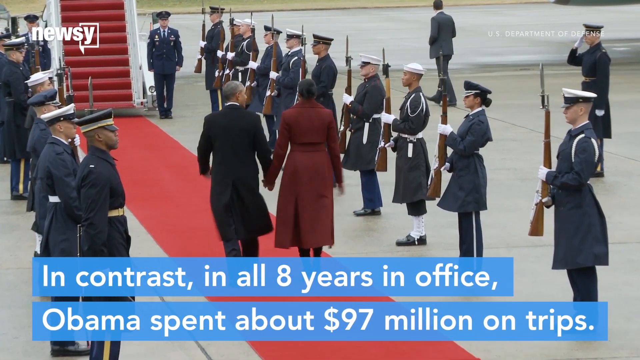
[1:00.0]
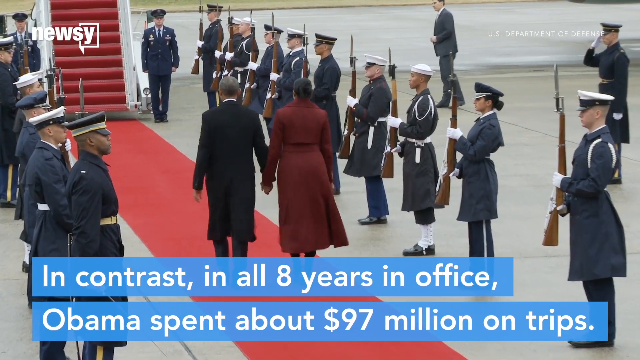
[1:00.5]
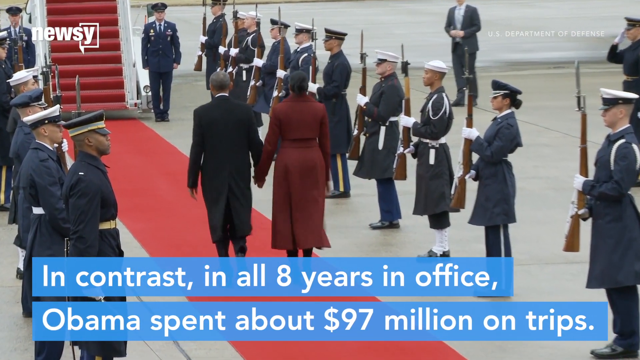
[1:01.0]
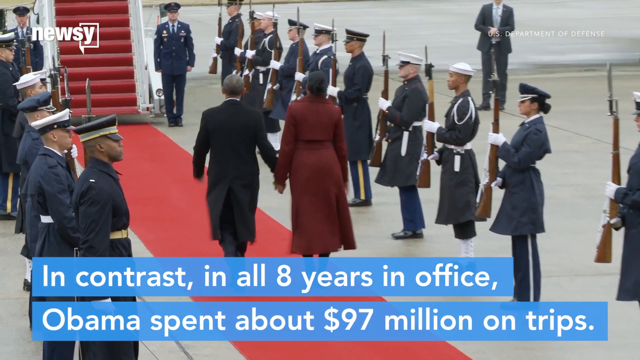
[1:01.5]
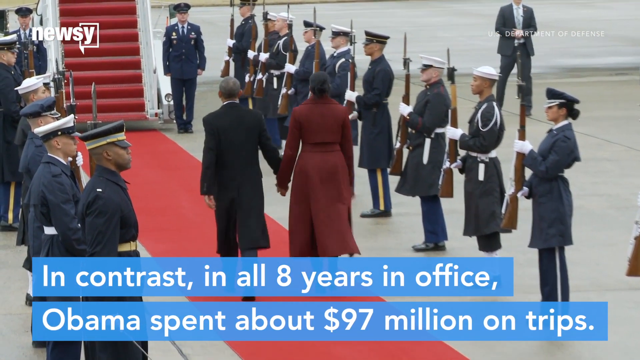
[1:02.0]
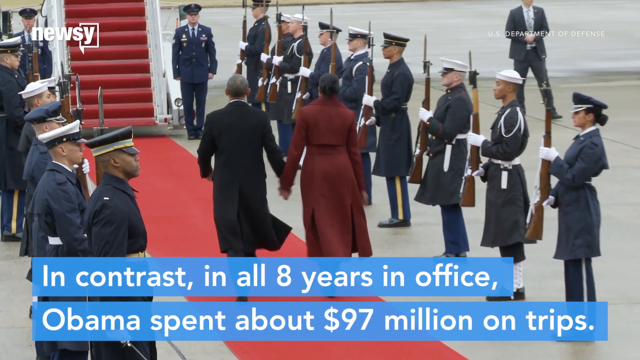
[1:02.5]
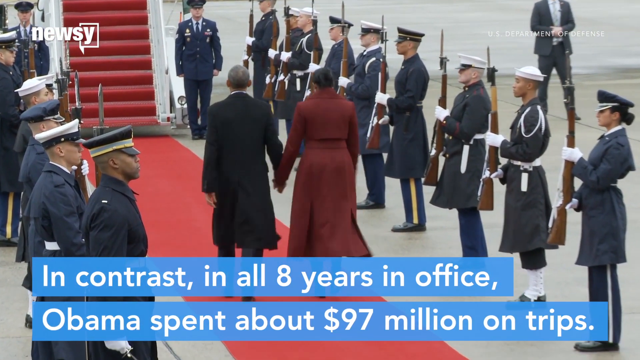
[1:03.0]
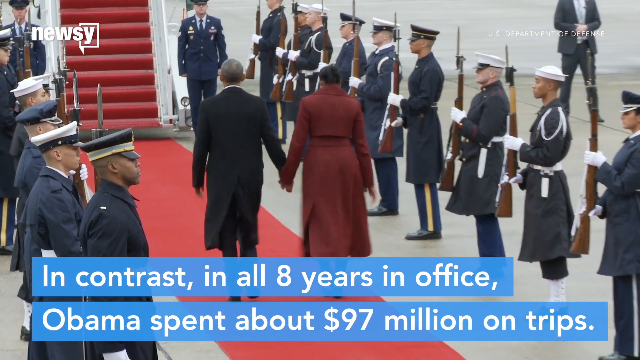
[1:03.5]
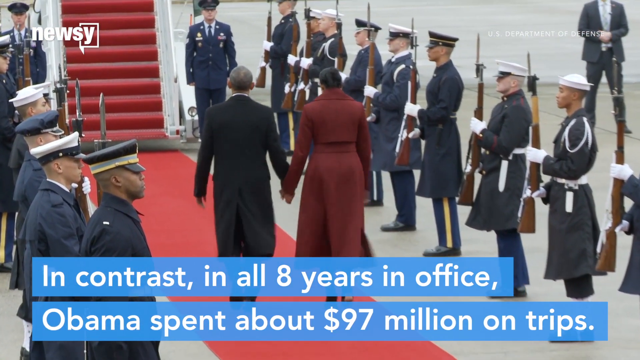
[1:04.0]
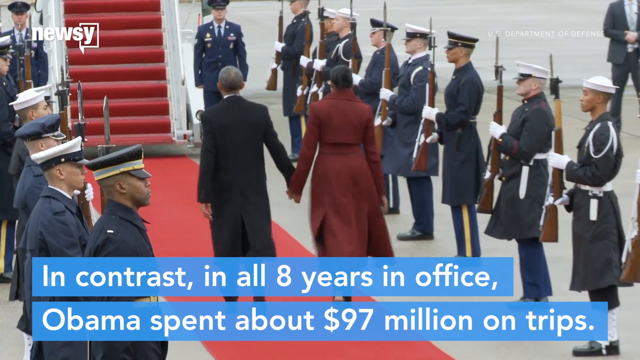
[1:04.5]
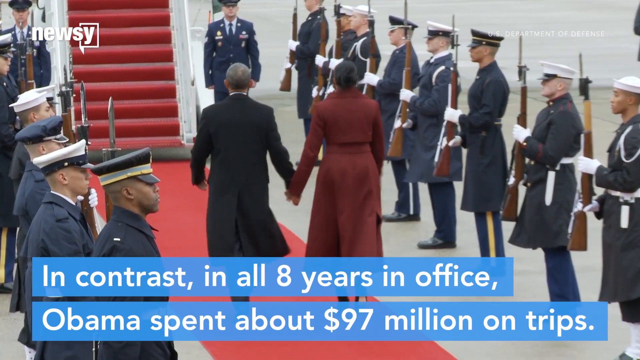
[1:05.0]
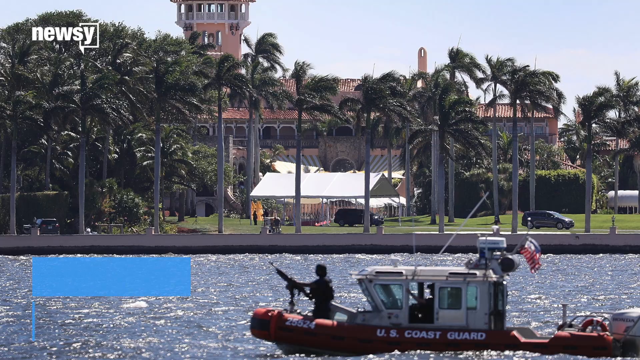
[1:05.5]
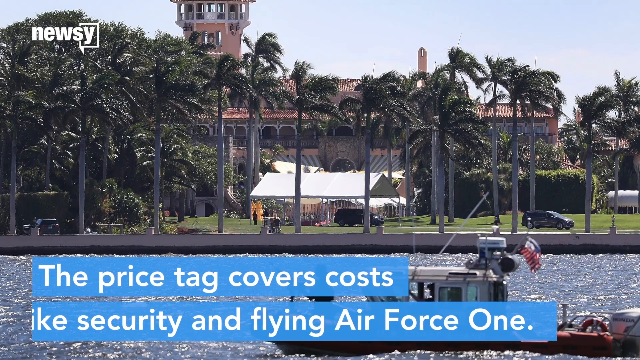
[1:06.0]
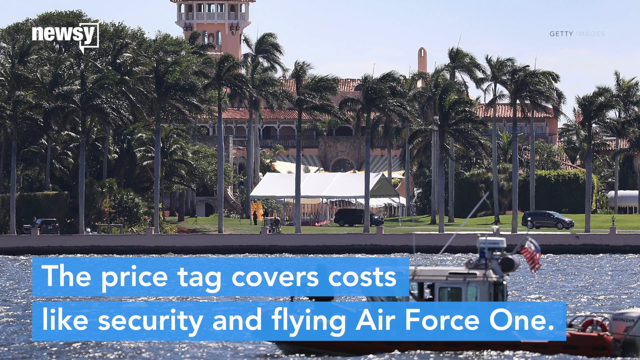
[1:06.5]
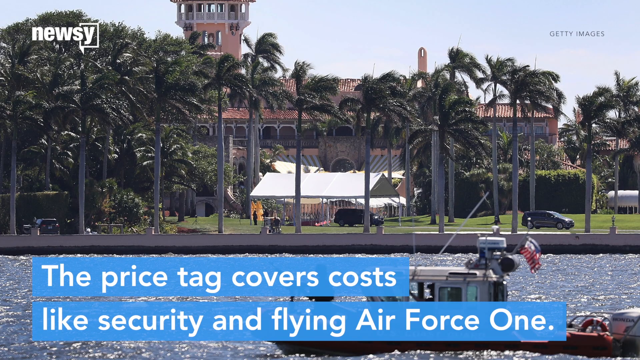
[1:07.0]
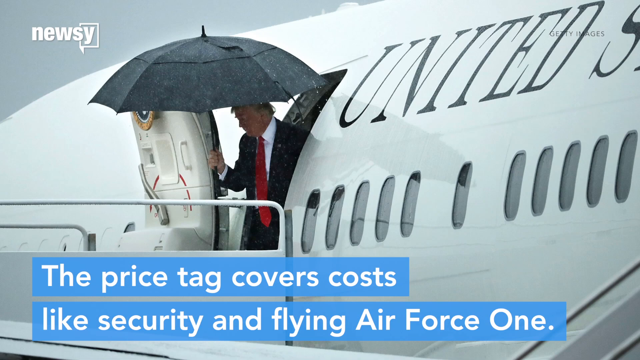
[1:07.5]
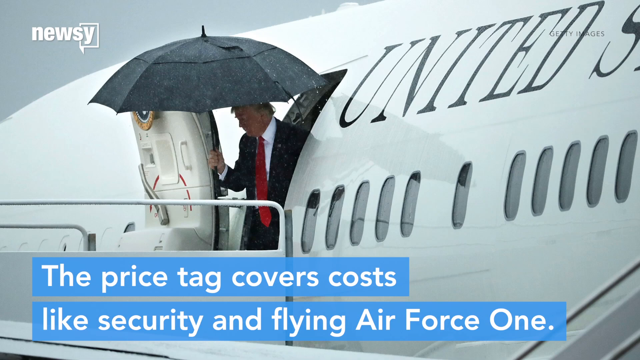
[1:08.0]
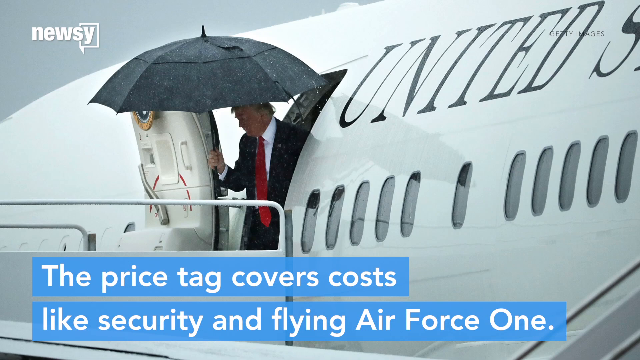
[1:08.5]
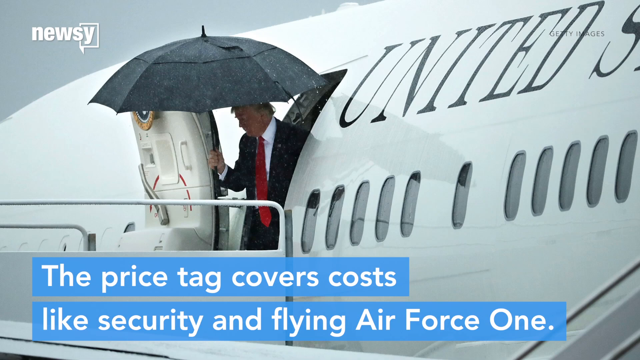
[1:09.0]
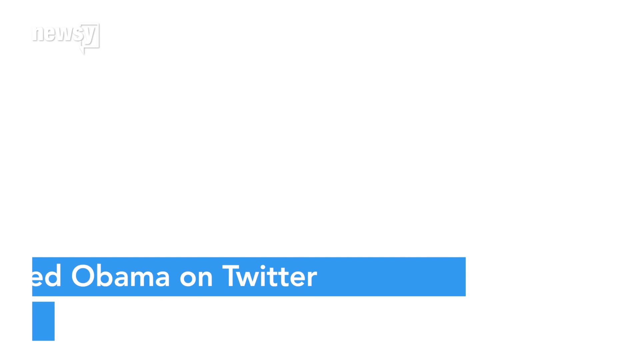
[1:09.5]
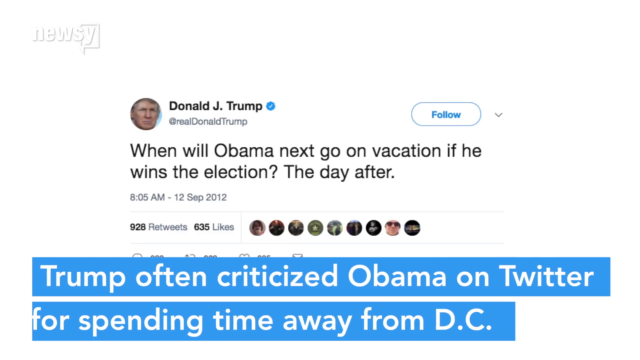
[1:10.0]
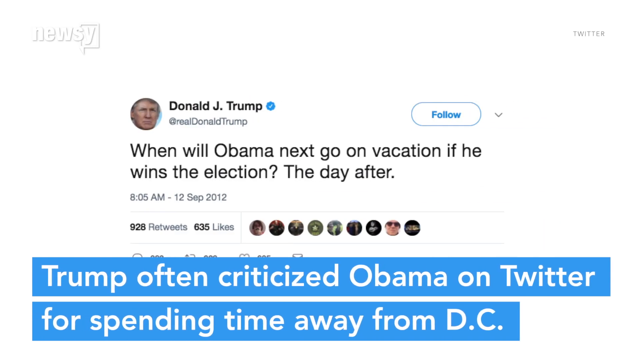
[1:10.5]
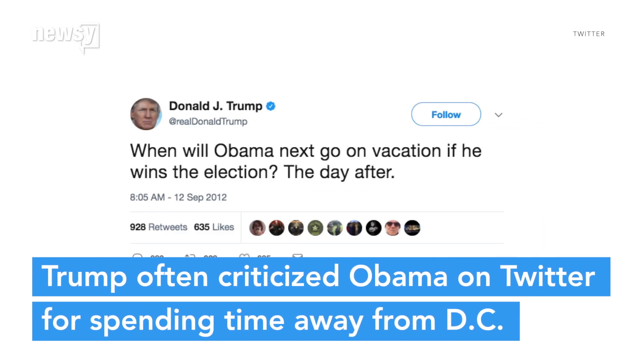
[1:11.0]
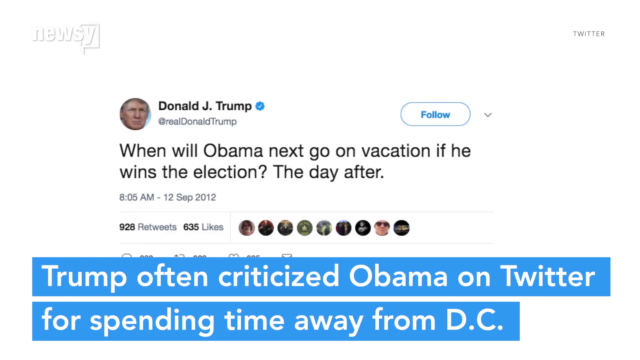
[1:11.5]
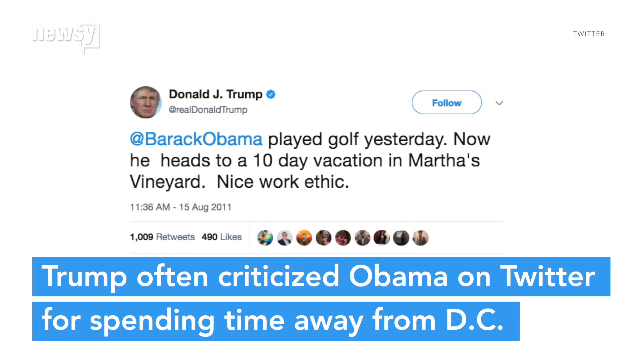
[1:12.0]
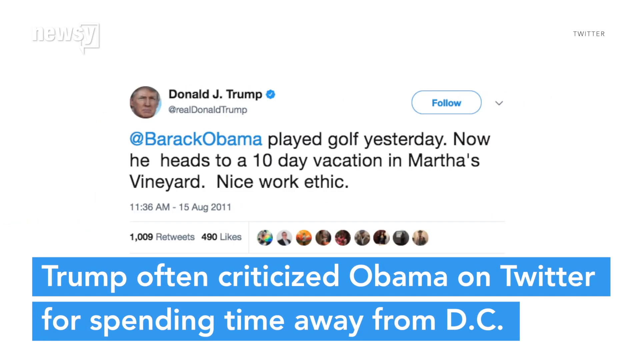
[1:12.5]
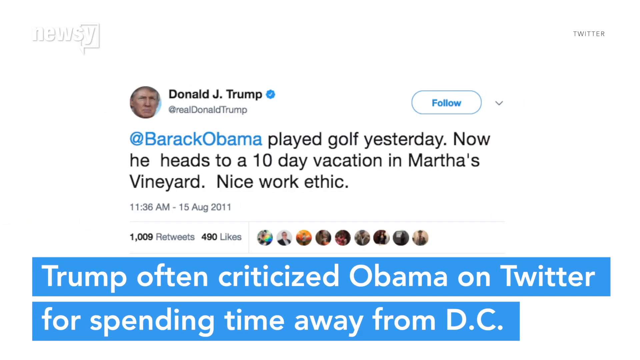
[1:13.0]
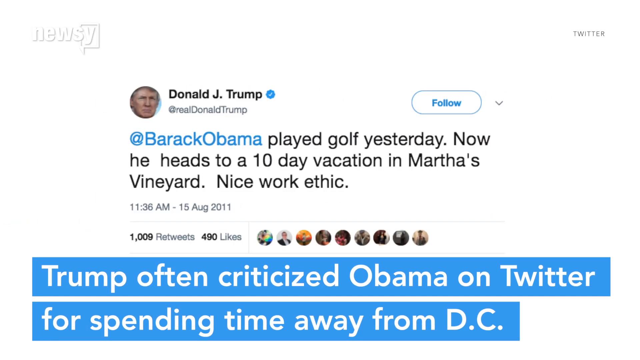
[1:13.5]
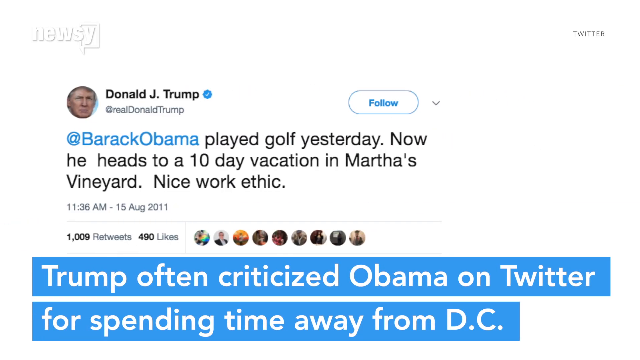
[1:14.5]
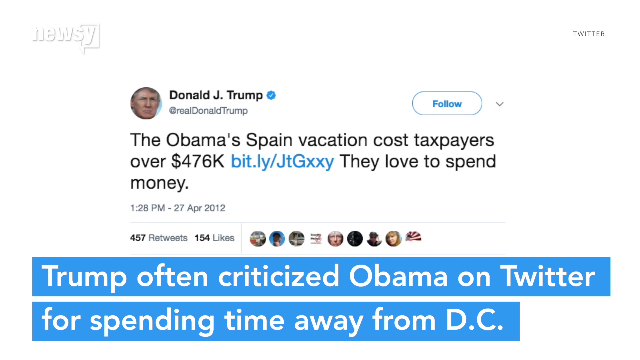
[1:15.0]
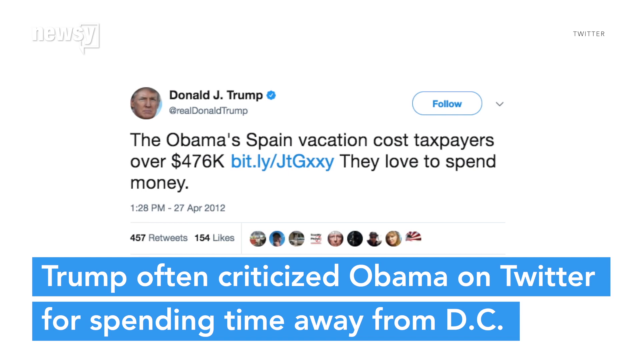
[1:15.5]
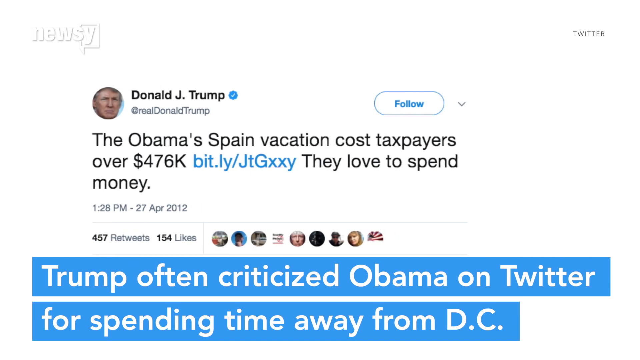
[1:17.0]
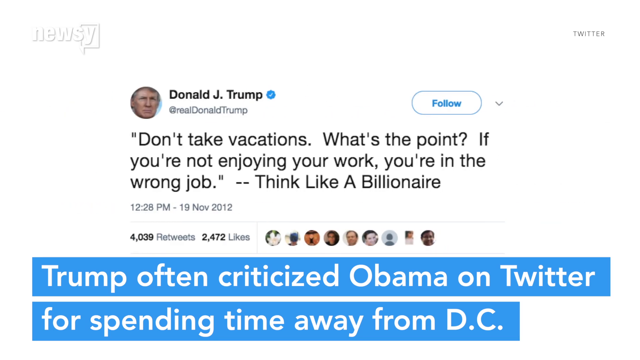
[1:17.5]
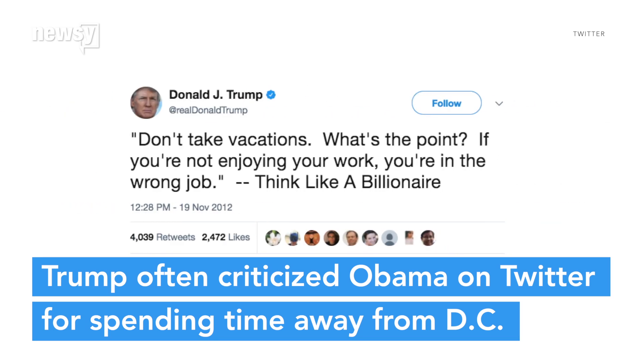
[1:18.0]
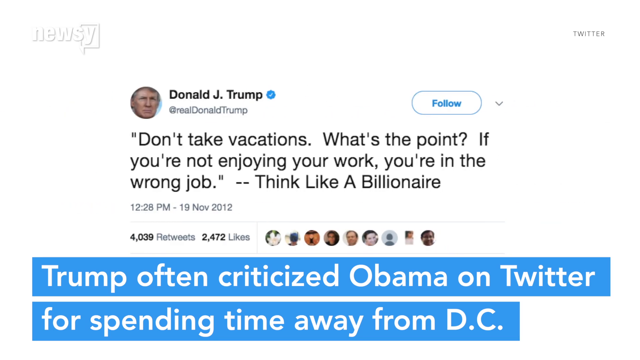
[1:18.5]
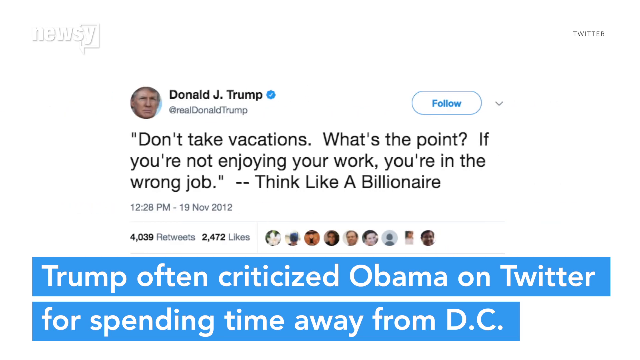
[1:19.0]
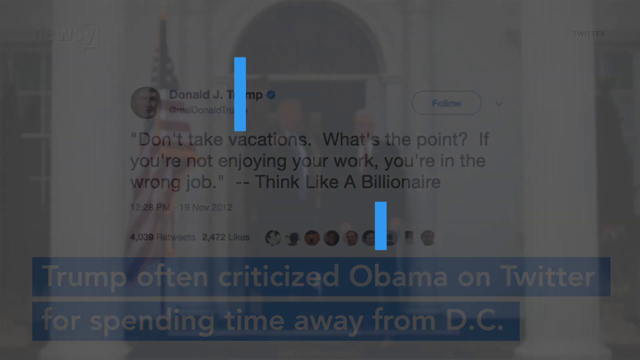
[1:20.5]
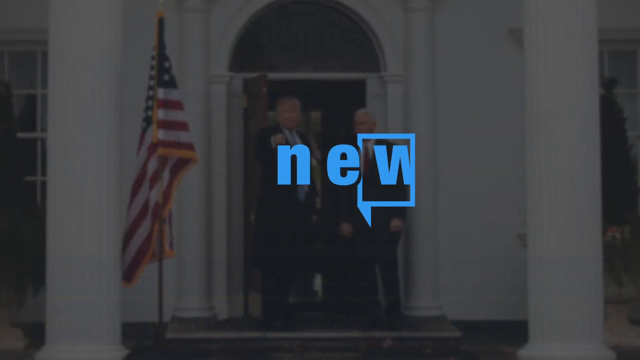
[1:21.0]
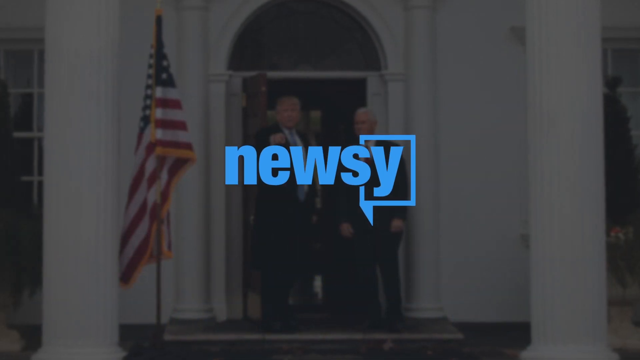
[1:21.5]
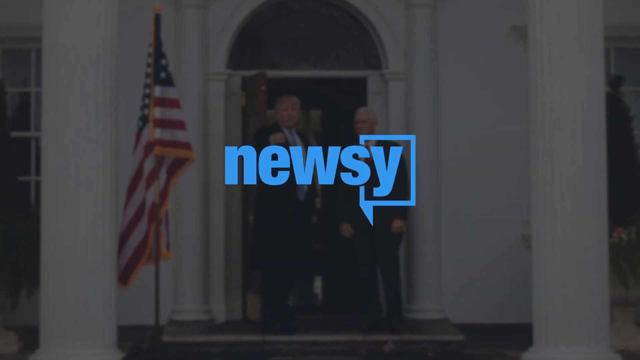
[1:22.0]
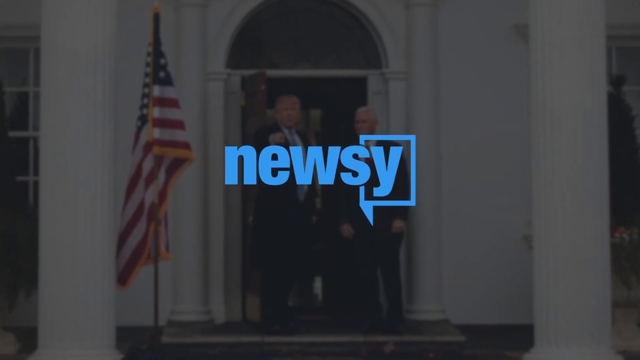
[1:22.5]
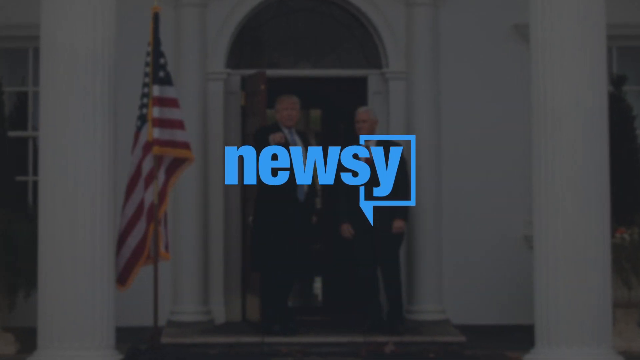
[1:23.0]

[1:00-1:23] Obama walks before a guard of honour toward Air Force One, holding the hand of his wife Michelle. The camera then focuses on Trump holding an umbrella at the entrance of Air Force One. A post from Donald Trump's X account reads "when will Obama next go on vacation if he wins the election the day after?" and a caption begins "Trump often criticized Obama" and refers to spending time away from D.C. Another post from Trump, made while Obama was president, reads "during the vacation, what is the point if you are not enjoying your life, you are in wrong jobs, think like a billionaire." The video appears to be comparing the trips and spending of Obama as president with those of Trump as president.